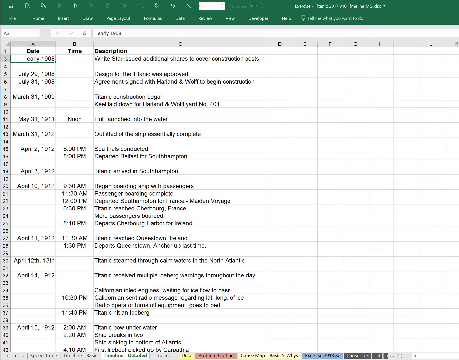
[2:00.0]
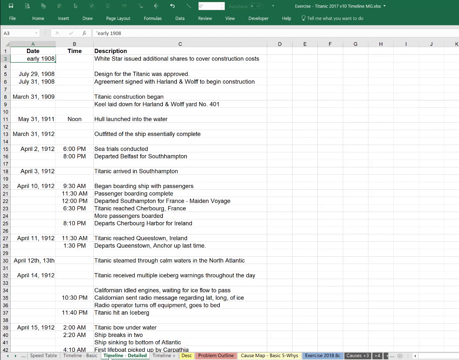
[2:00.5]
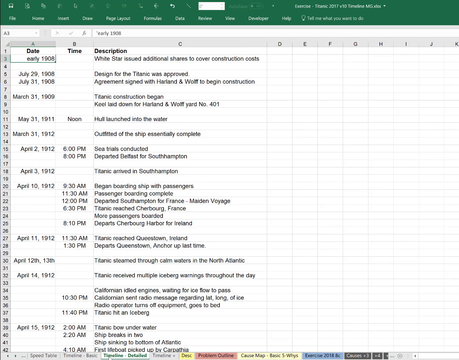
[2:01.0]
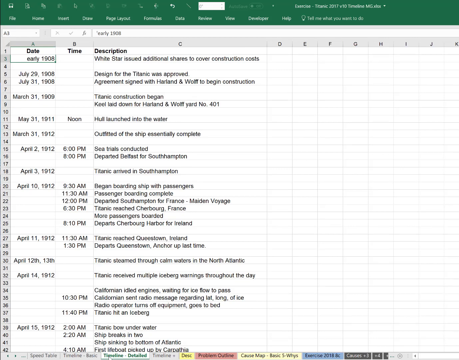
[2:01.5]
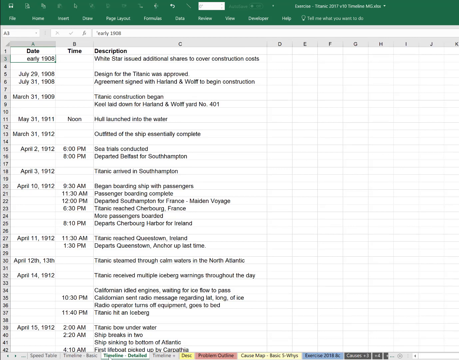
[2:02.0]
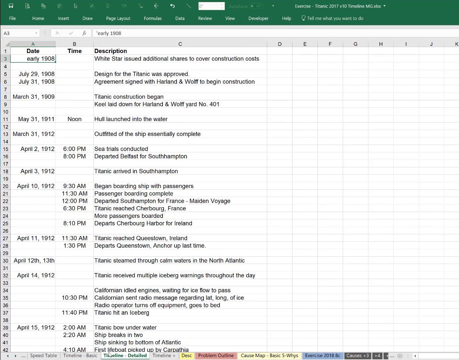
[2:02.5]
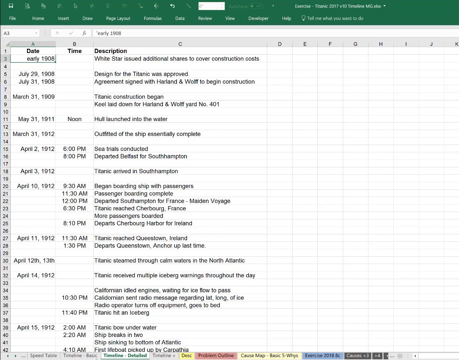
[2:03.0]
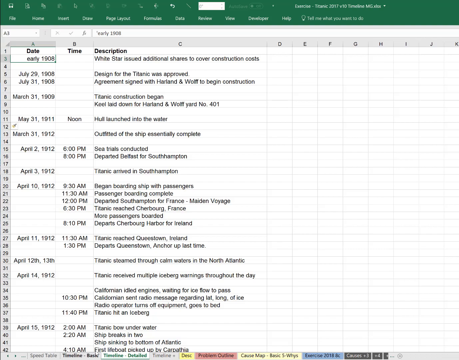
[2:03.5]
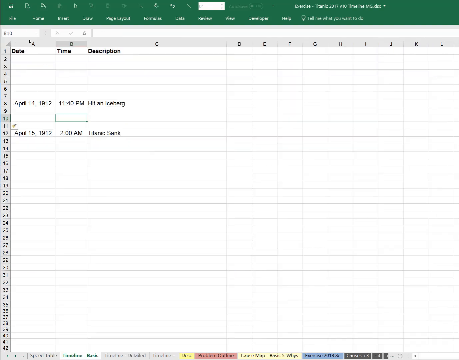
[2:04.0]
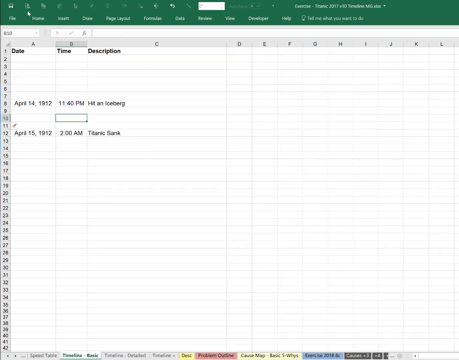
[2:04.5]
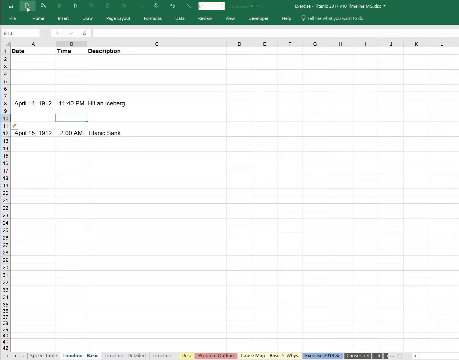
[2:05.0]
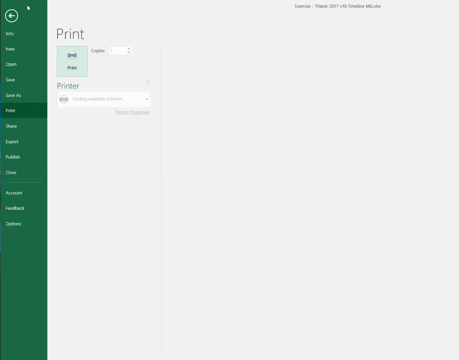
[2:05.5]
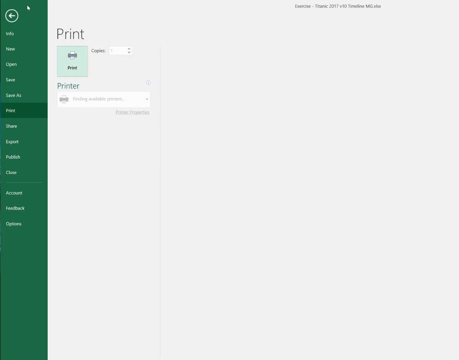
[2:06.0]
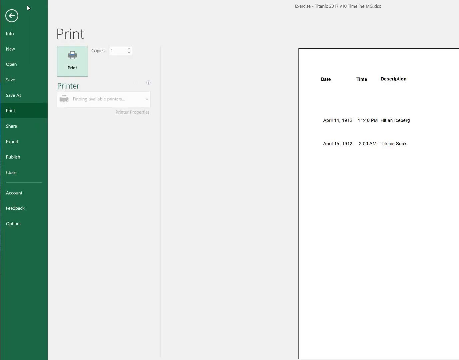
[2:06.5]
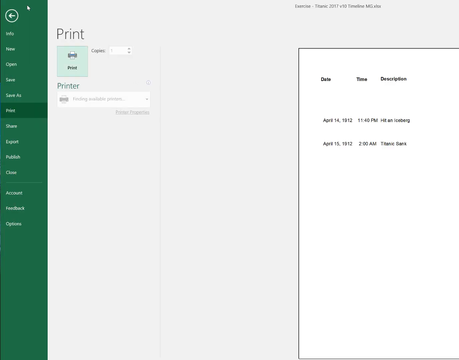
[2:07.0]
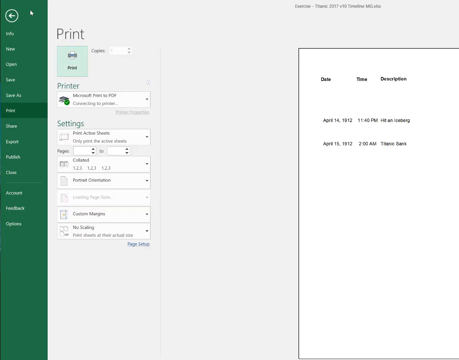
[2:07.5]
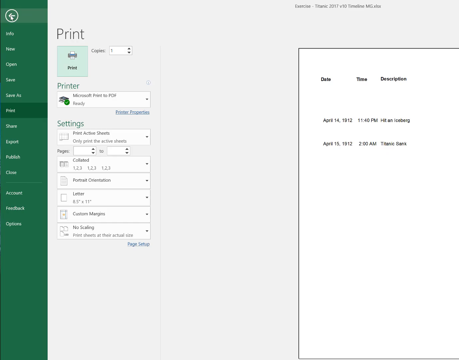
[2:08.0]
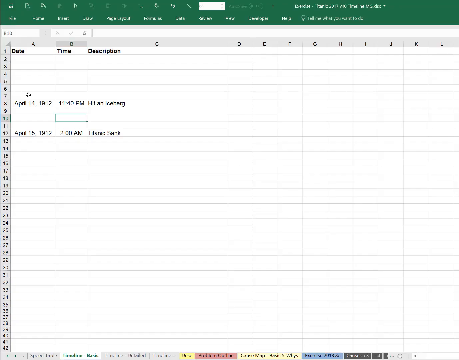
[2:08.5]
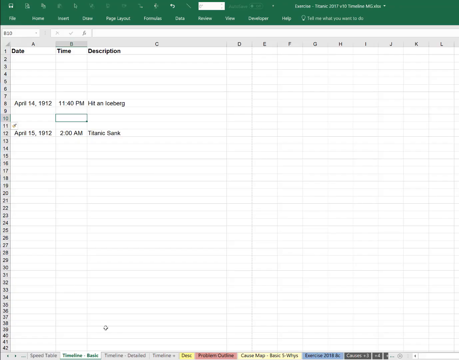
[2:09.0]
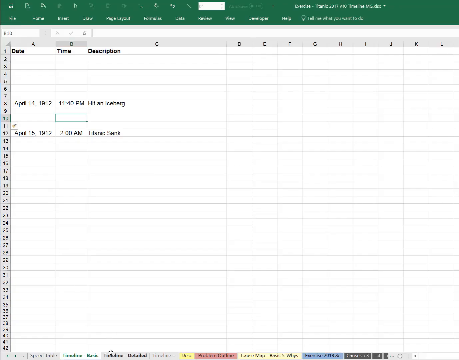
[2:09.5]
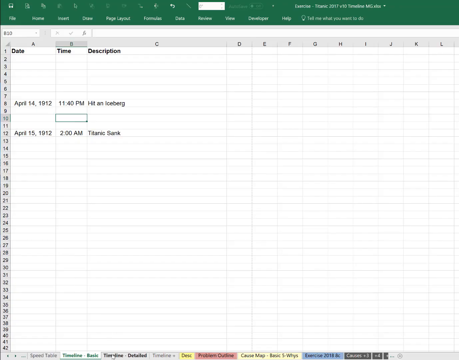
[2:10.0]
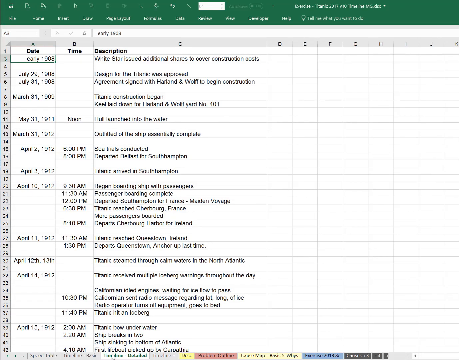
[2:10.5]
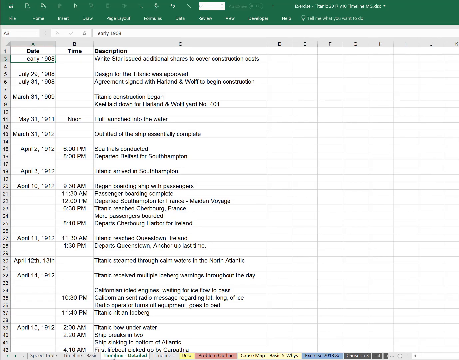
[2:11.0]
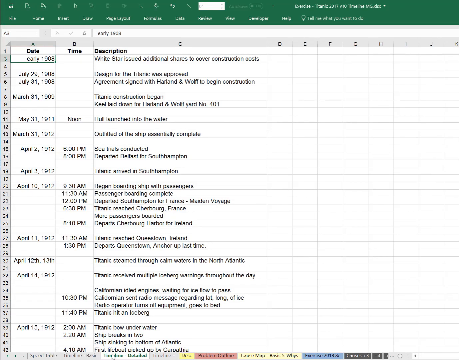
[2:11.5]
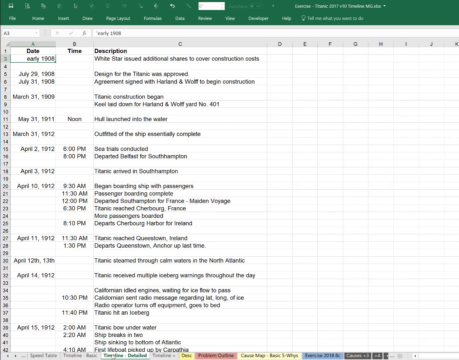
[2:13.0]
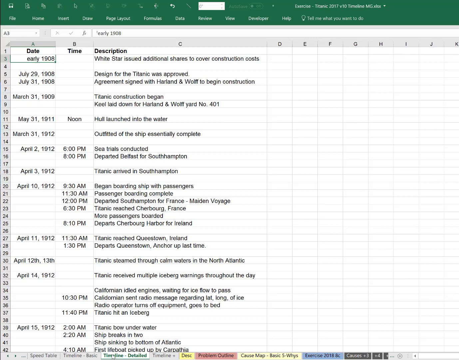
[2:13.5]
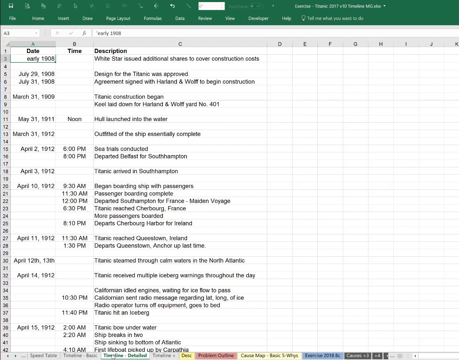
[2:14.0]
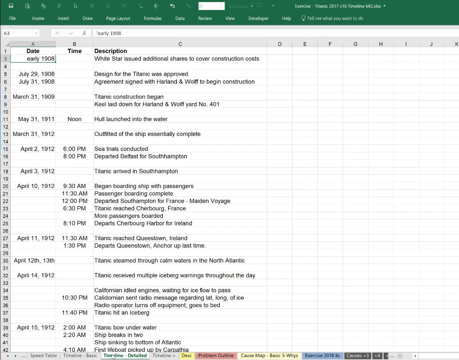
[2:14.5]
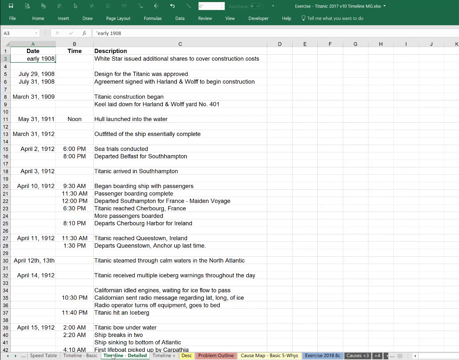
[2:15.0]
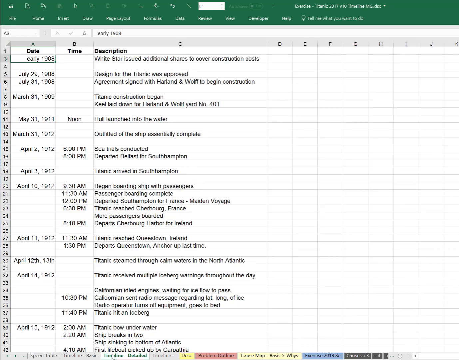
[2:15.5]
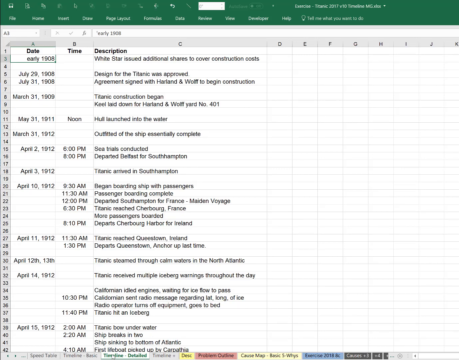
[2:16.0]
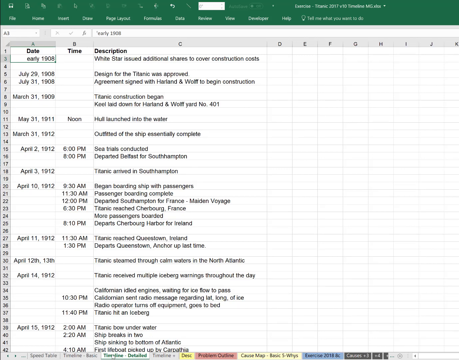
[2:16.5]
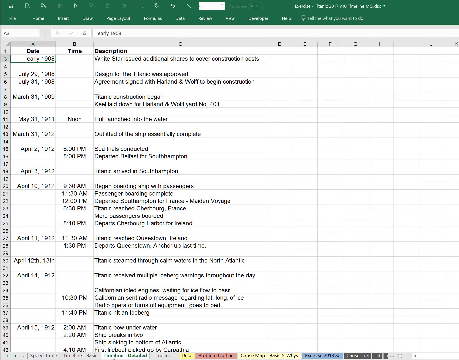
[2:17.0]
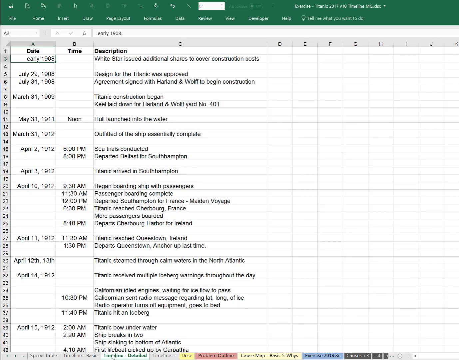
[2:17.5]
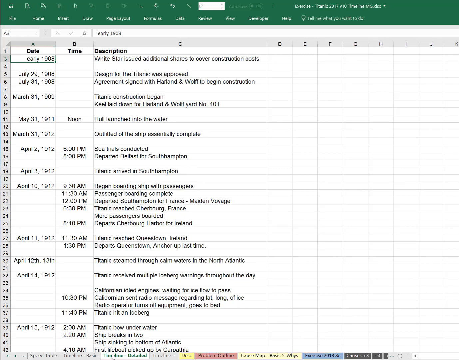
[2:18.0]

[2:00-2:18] The document with the most text is on screen, starting from early 1908 under date and ending with April 15, 1912 around row 39. The user goes back to the less populated document, which has text only in row 8 and row 12, and opens the print screen. The print window has three columns: the left column is green and lists info, view, open, save, save as, print, share, export, and close; next to it are the print icon, a printer drop-down menu, and a larger blank section. The document then appears, showing April 14, 1912, hit an iceberg at 11 40 p.m., and April 15, 1912, 2 a.m., when the Titanic sank. The user apparently presses the back button, returning to the last document, and then switches between the two documents. The document with many lines of text stays on the screen until the video ends.